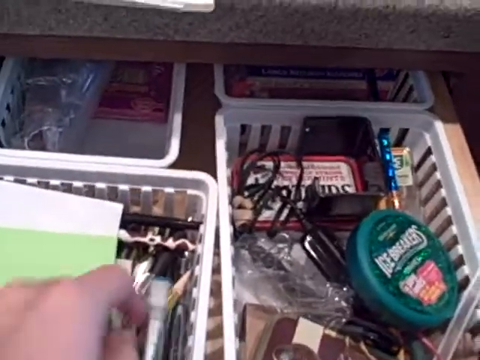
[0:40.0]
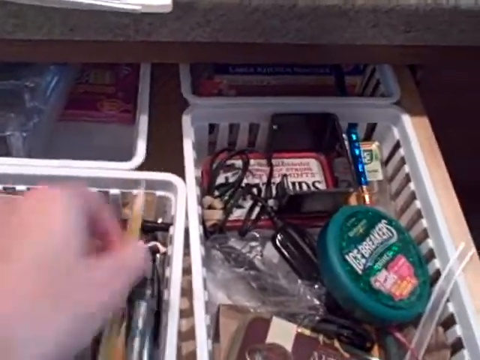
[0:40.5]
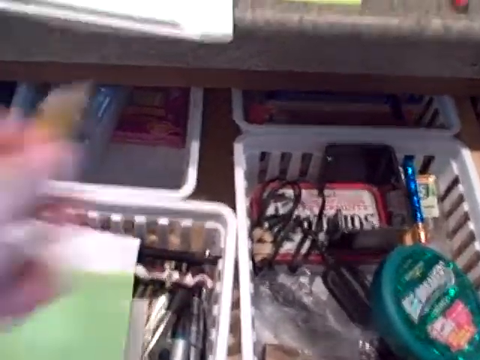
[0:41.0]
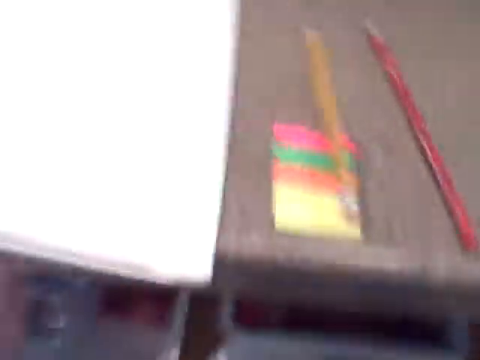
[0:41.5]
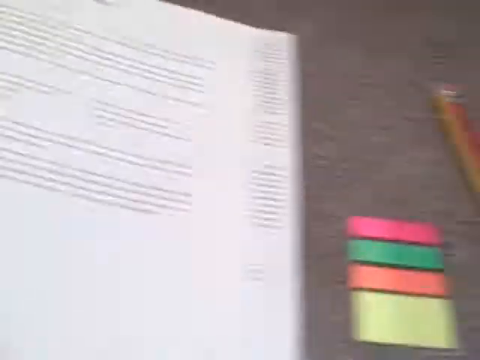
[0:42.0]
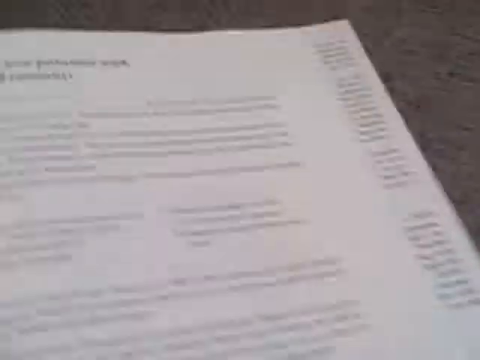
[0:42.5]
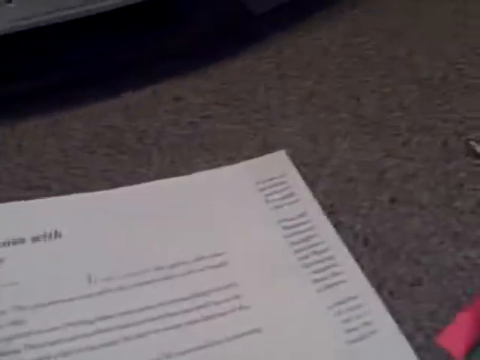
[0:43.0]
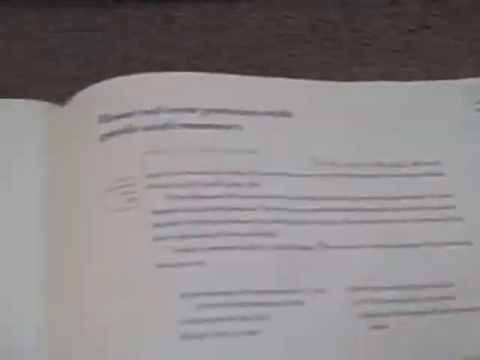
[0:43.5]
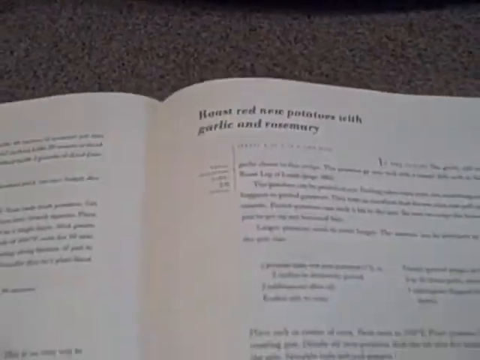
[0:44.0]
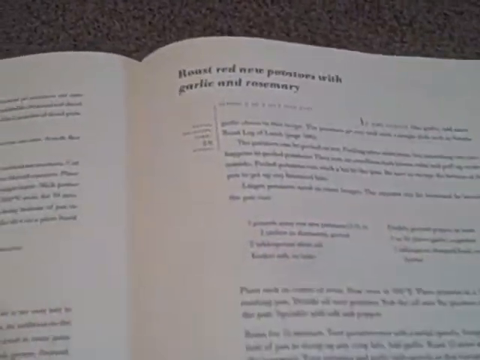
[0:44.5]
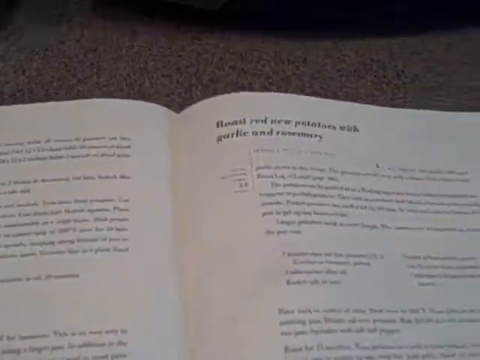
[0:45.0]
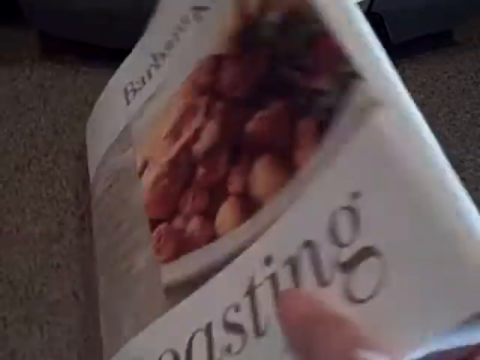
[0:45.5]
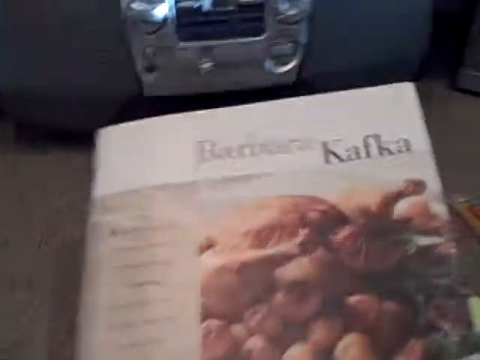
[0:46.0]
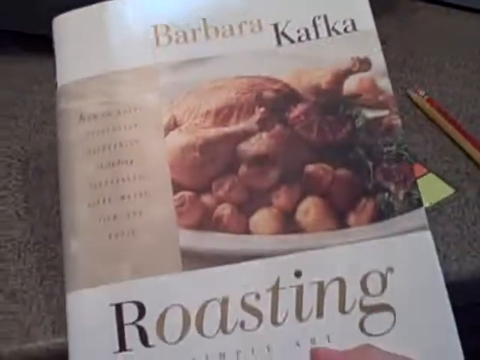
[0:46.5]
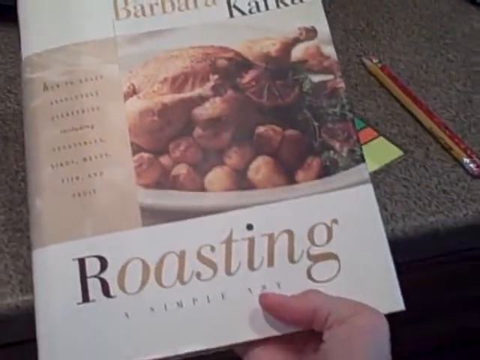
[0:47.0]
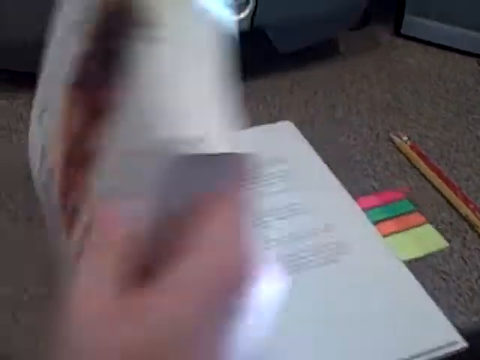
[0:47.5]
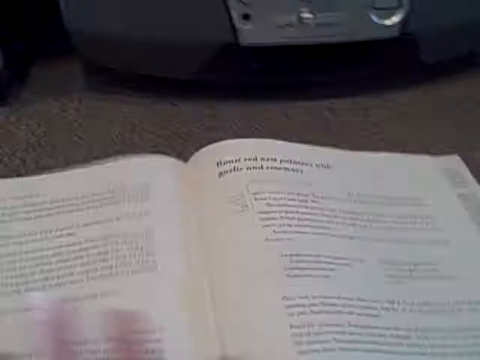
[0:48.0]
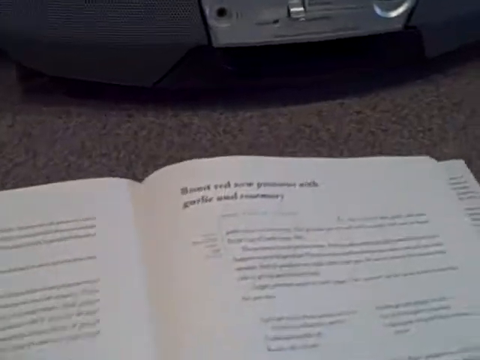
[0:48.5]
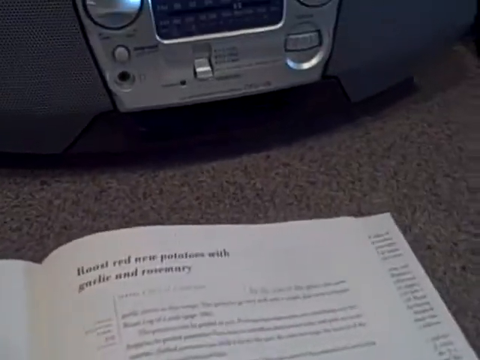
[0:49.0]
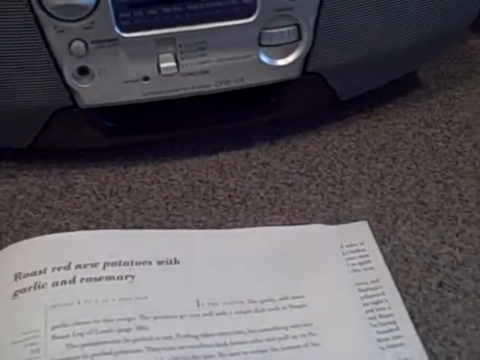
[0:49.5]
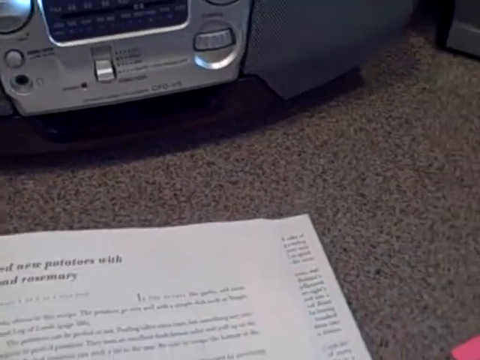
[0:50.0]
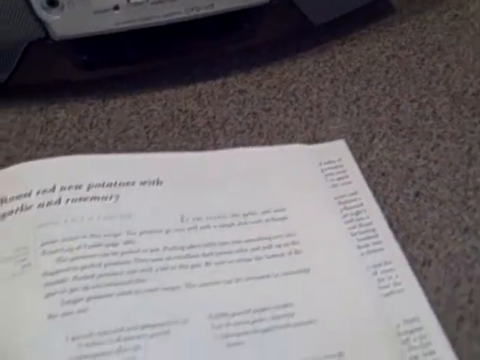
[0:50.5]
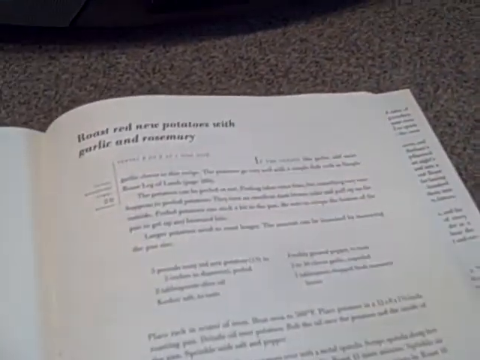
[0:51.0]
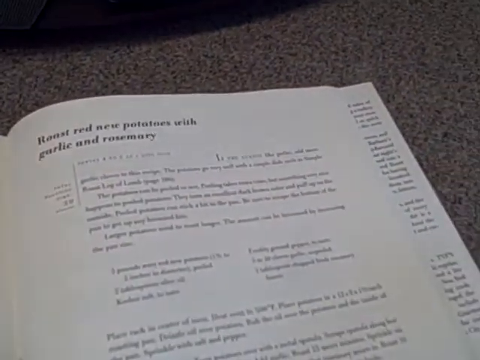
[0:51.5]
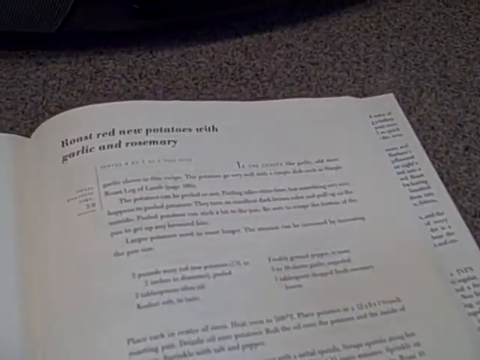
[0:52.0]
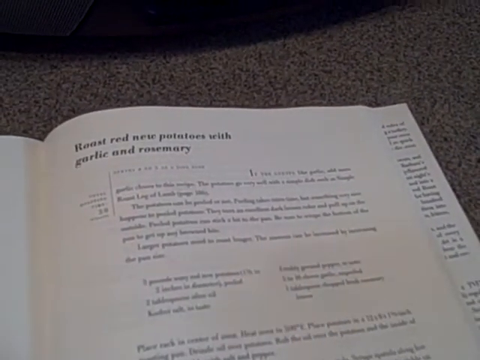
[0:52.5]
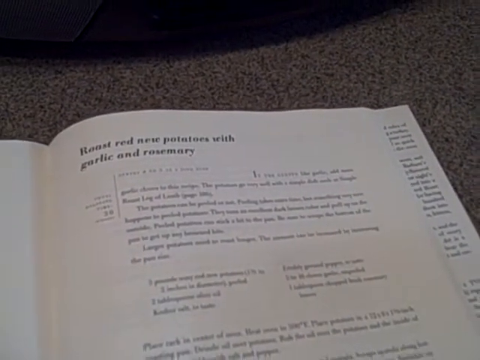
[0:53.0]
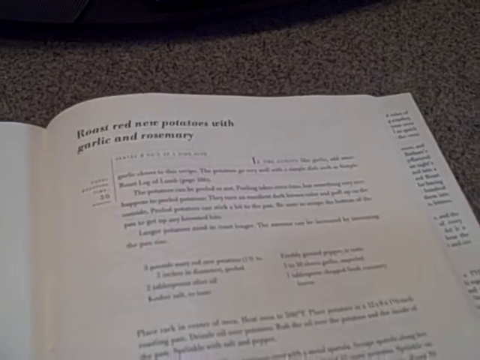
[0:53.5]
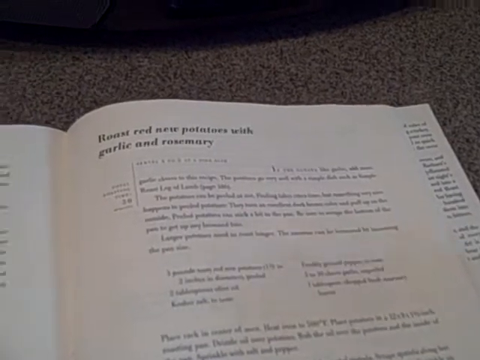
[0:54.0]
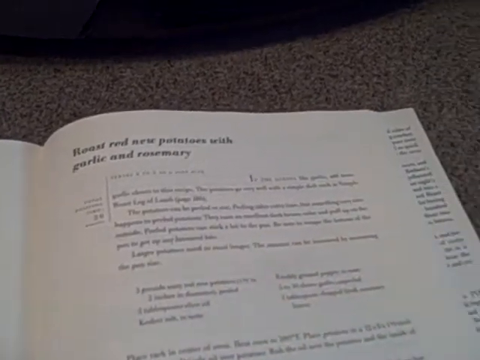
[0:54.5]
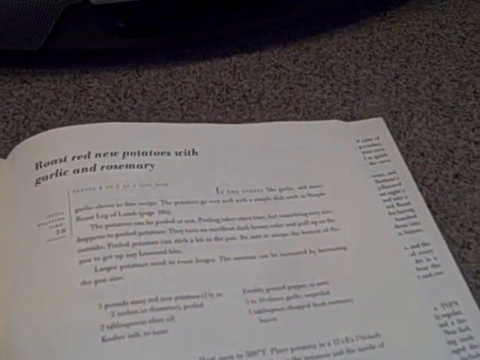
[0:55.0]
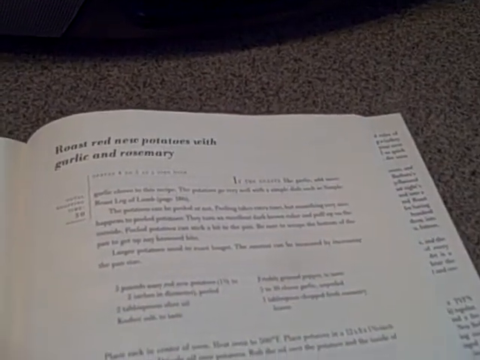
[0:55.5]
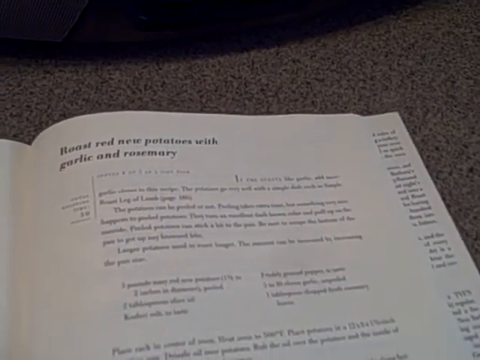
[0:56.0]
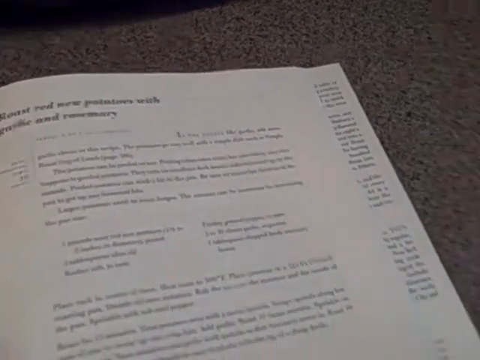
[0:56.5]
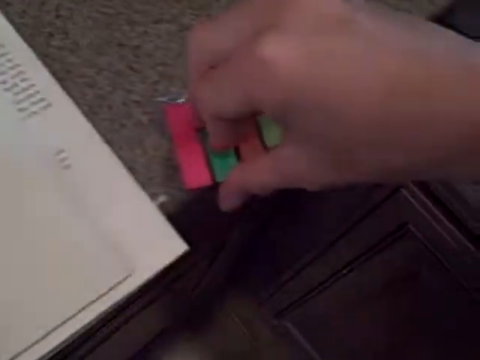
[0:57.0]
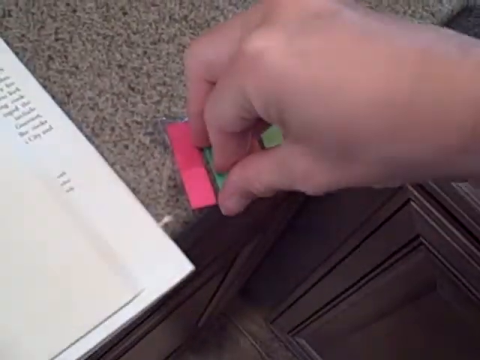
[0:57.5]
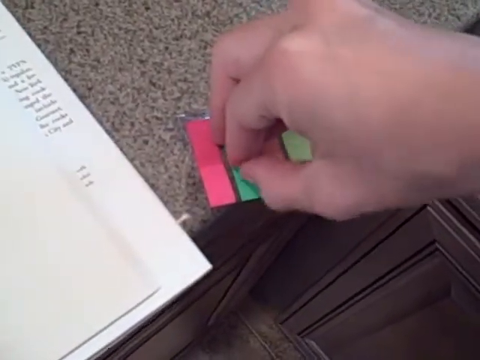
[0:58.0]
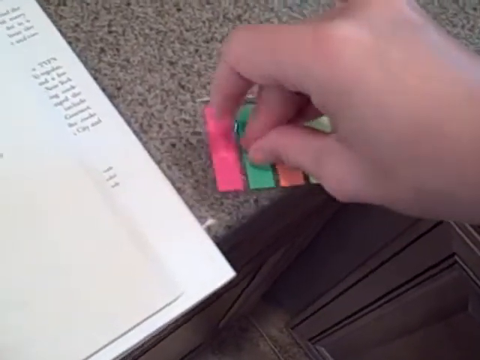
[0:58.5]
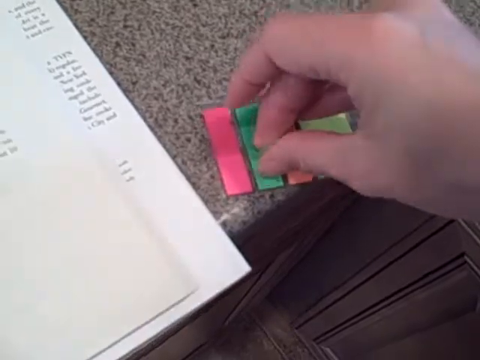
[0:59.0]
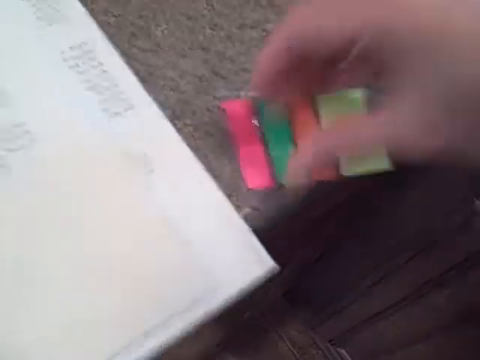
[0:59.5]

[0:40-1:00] On the grey worktop is some paper that looks like a workbook or recipe book. The woman takes out the pencils and the highlighted note dividers. The camera moves around, focused on the worktop, as she appears to take off one of the highlighted note dividers. In the background is a silver boombox stereo with big grey speakers. The camera moves around quite a lot trying to focus on the recipe and on what the woman is doing. The recipe appears to be roast red new potatoes with garlic and rosemary, and the page appears to show the ingredients and method. The front of the book is shown; it is called roasting. The view then returns to her and the green note she is going to put onto the page.